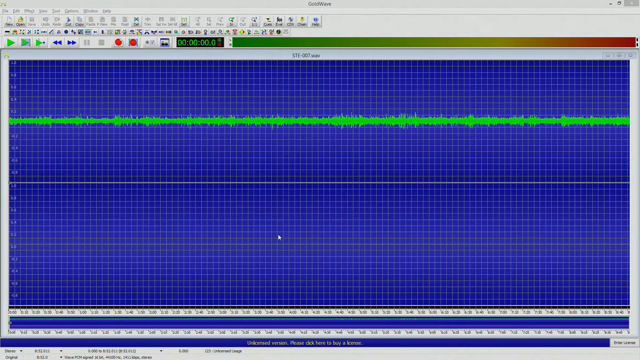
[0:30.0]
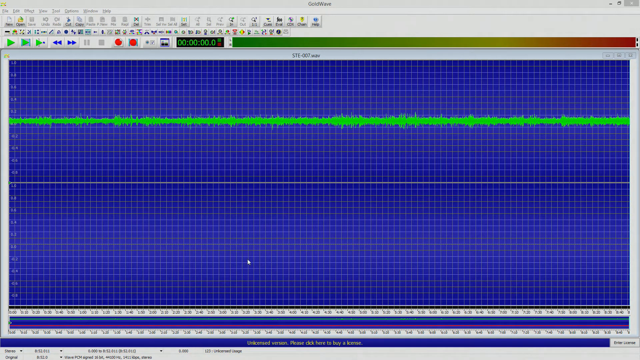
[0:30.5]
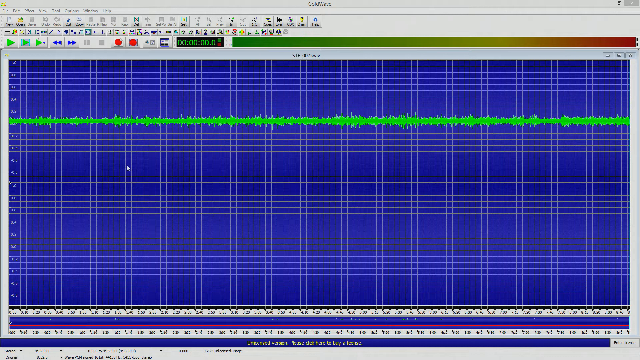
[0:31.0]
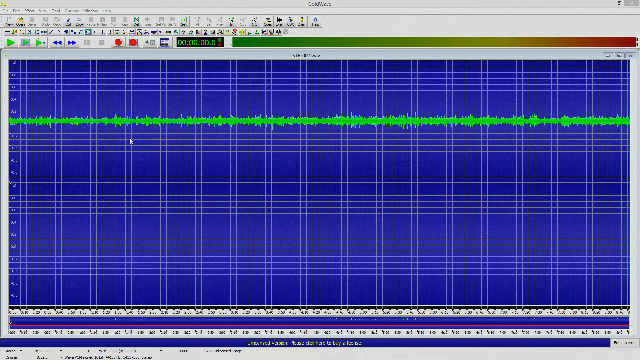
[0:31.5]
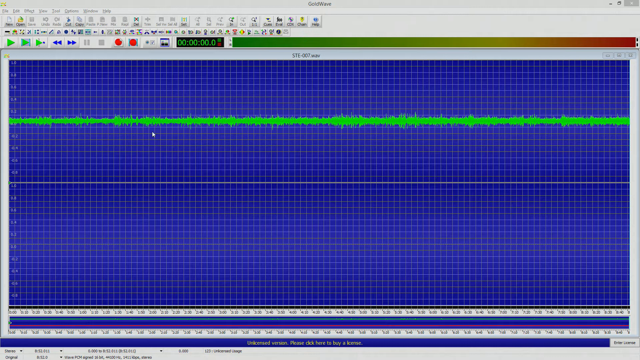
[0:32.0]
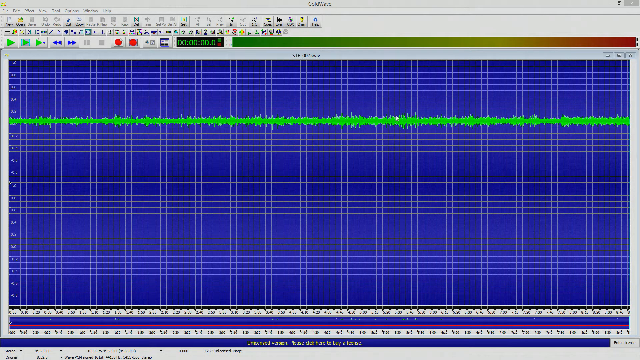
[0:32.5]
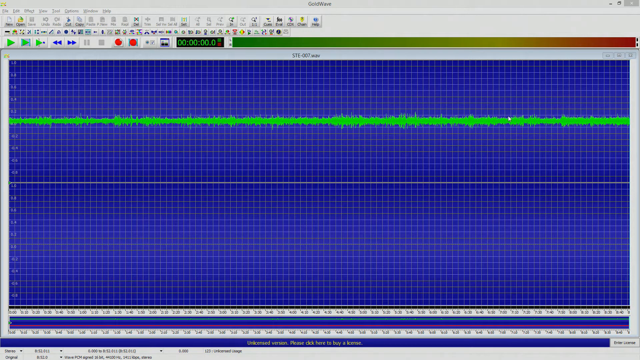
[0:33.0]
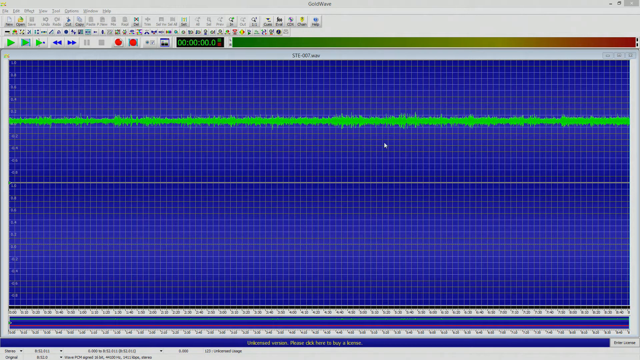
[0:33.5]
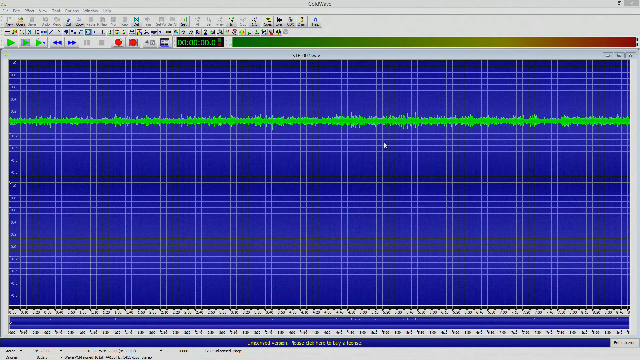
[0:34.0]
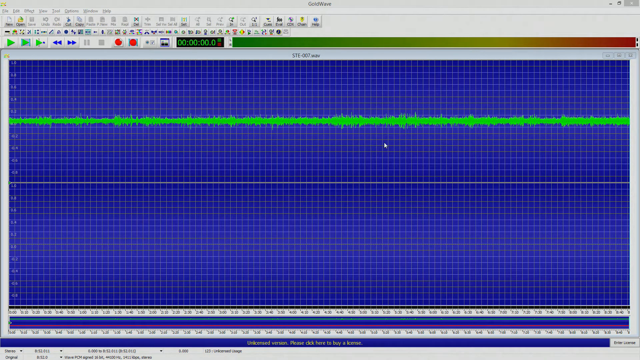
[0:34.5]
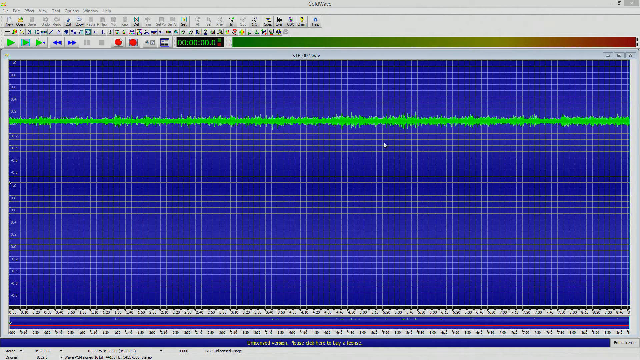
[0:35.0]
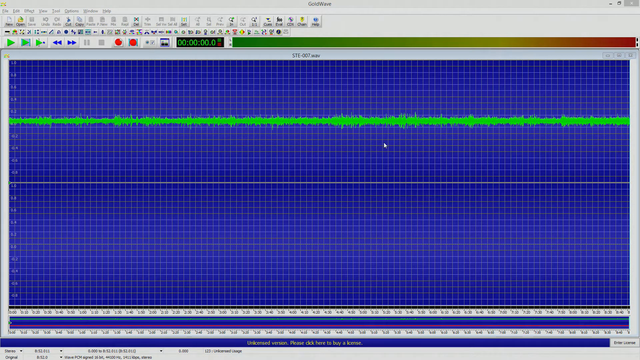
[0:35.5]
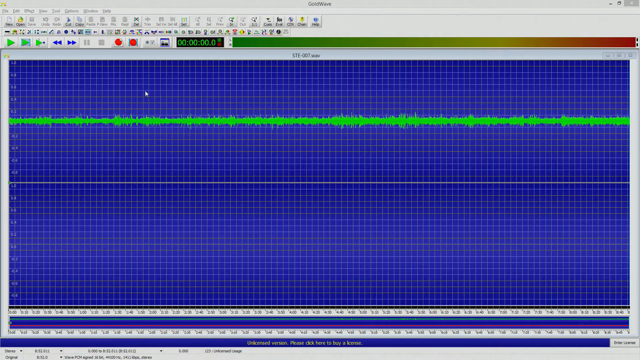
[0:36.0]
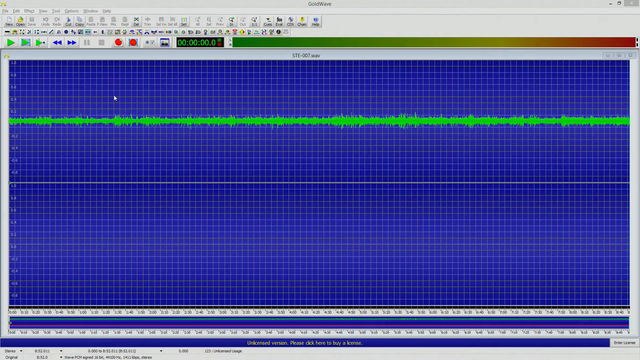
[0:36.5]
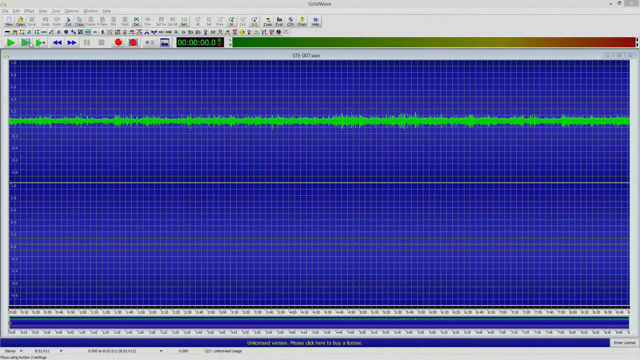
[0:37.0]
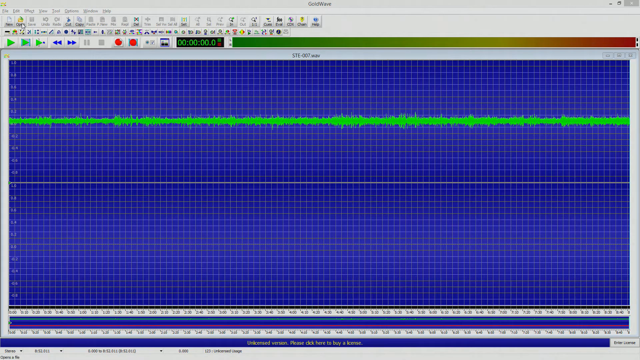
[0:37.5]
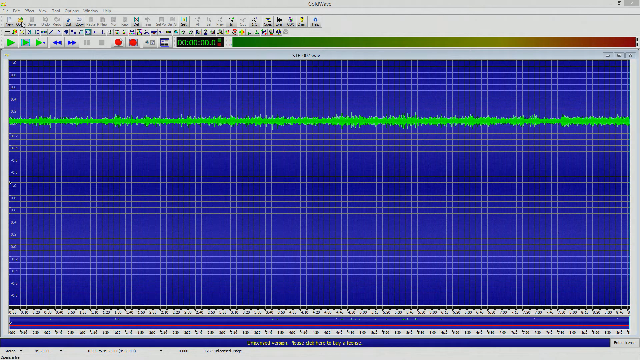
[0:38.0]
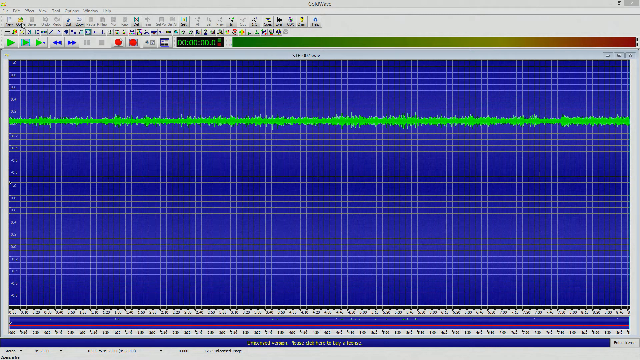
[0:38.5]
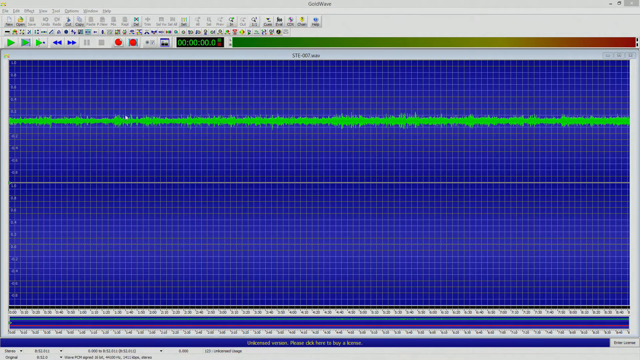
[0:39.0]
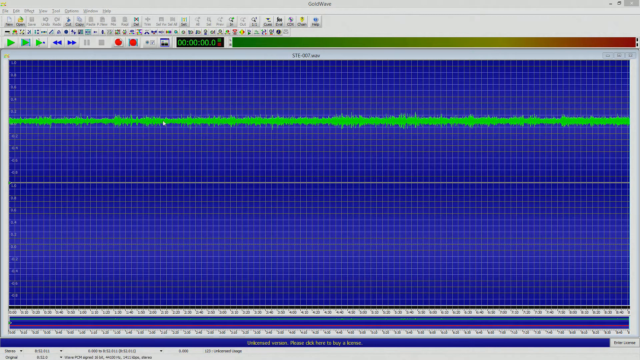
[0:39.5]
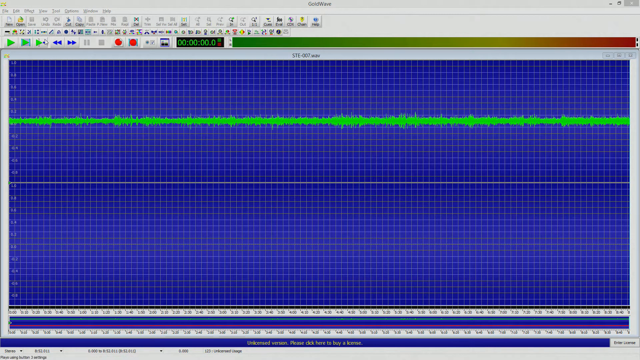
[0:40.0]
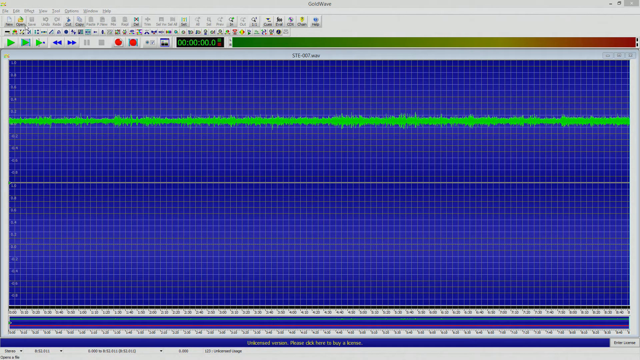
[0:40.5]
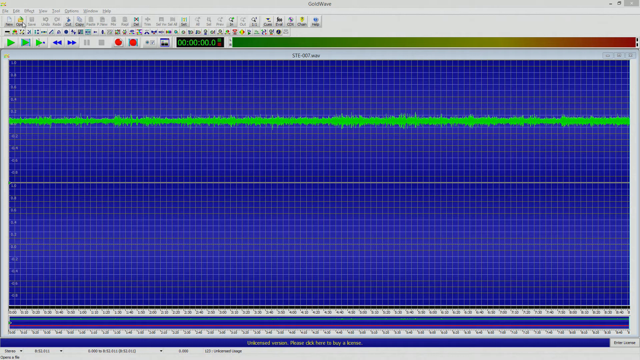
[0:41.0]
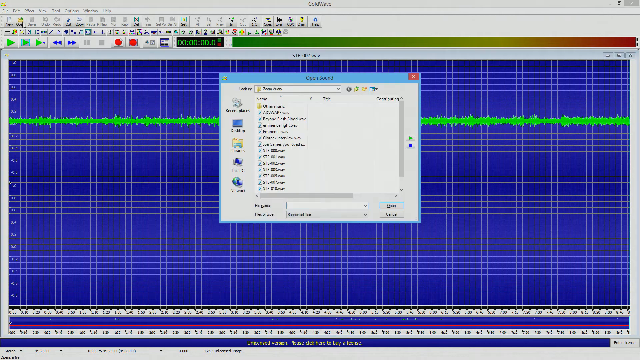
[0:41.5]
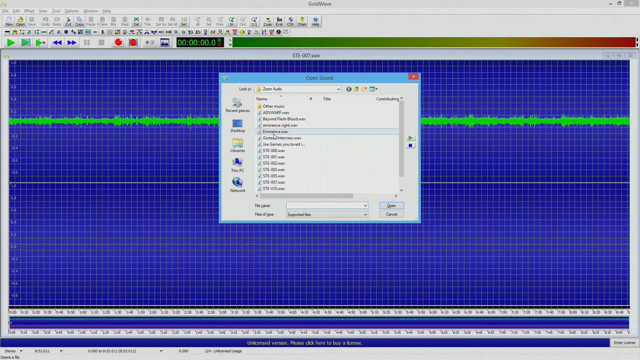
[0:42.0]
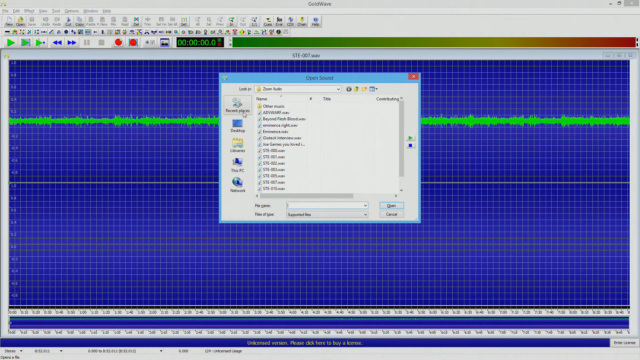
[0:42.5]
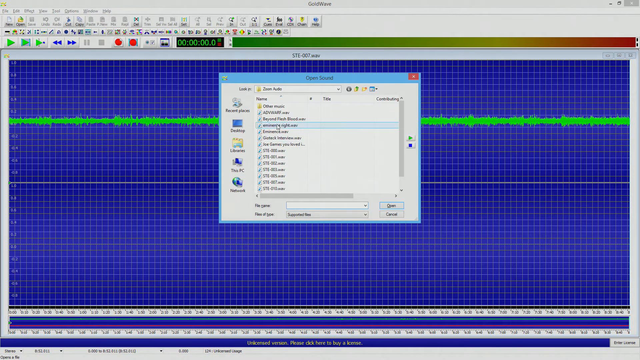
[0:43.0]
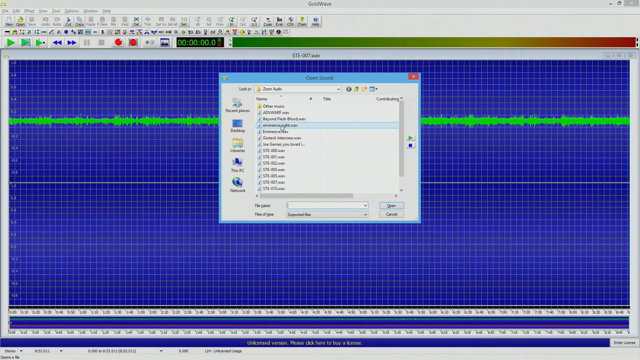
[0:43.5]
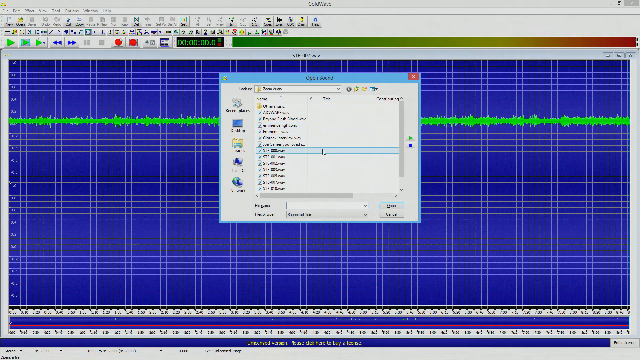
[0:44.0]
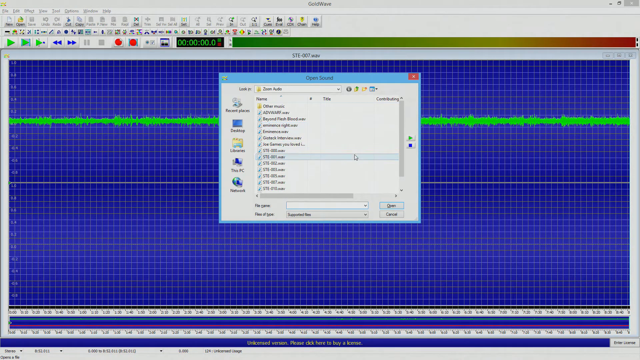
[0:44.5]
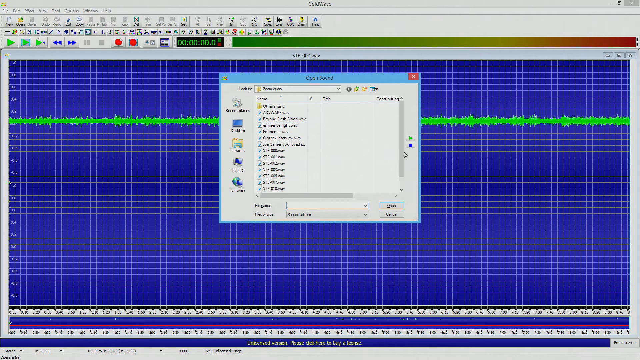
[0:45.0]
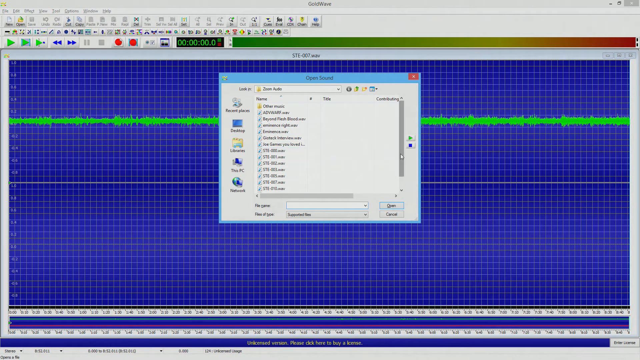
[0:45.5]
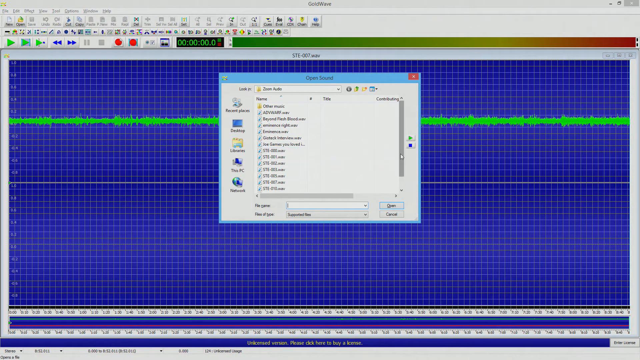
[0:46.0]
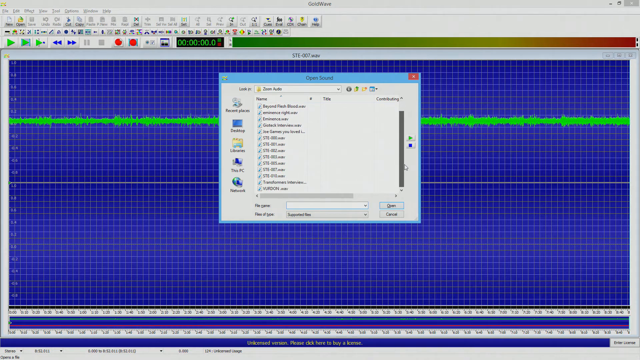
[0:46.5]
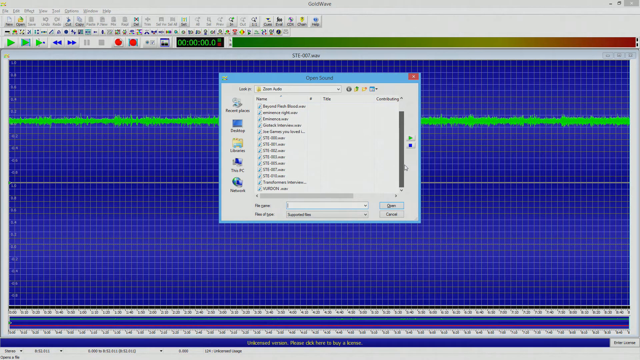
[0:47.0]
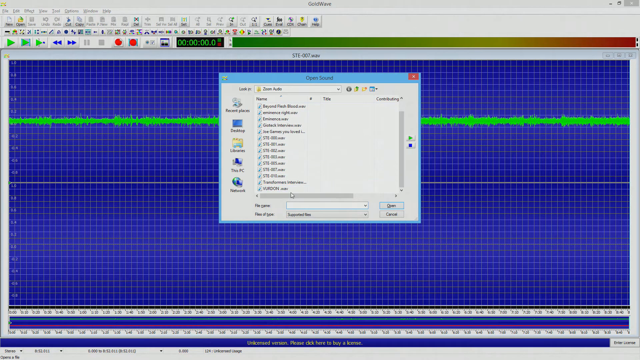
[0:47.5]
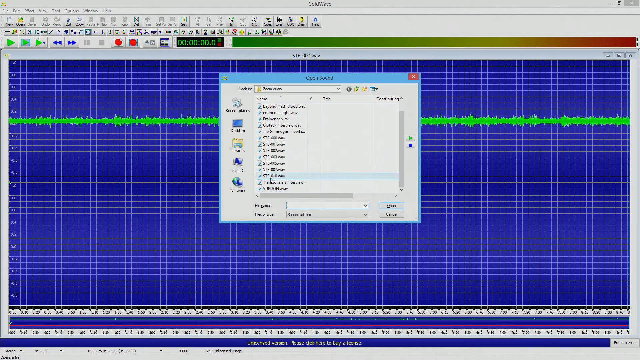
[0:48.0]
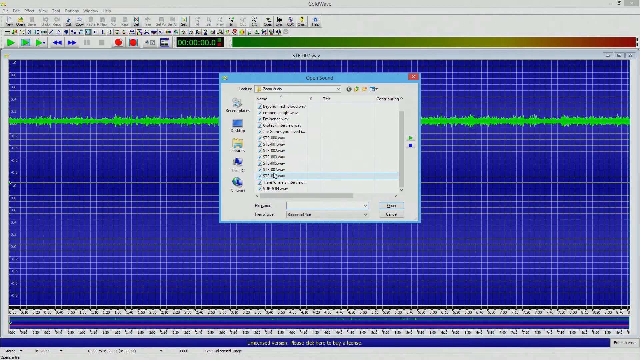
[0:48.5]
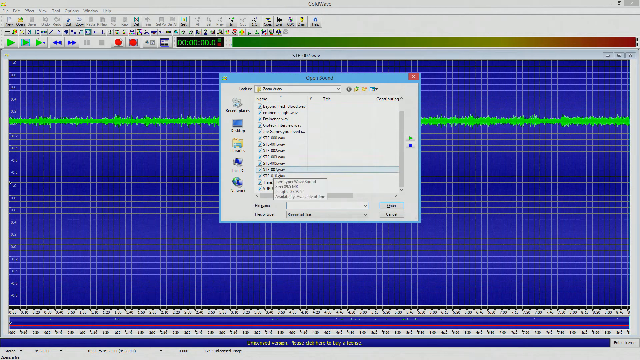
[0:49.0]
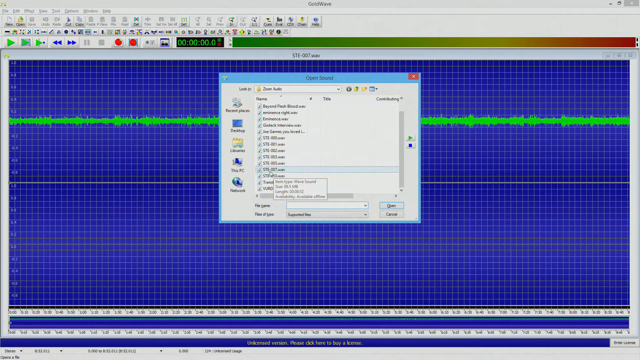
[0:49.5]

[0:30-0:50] A computer screen has a background that almost looks like a graph, with tiny boxes. Numbers run down the left side of the page. A lime green line with jagged, not smooth, edges goes across from left to right. Numbers run across the bottom of the screen in two white banners. Two horizontal lines lie under the green line: a gray line that is a little hard to see, and another gray one that is very hard to see. A pop-up appears in the box and someone selects a choice; as the cursor runs up, the highlight on the options moves up and down with it. The cursor is seen on the blue-purple page, whose vibrant color is eye-catching, as is the lime green line running horizontally across the screen.